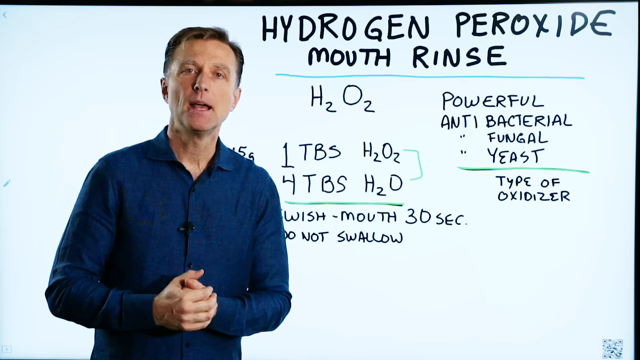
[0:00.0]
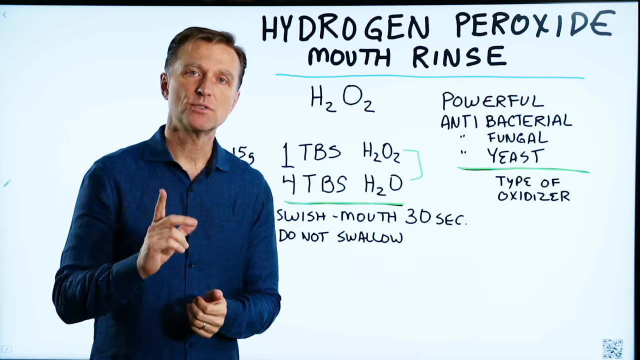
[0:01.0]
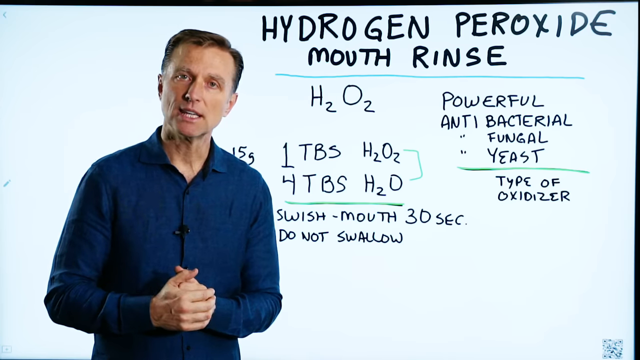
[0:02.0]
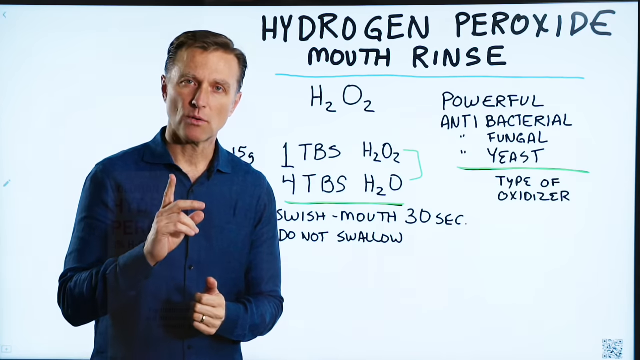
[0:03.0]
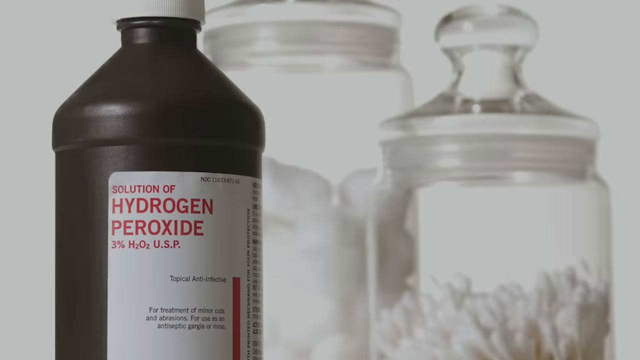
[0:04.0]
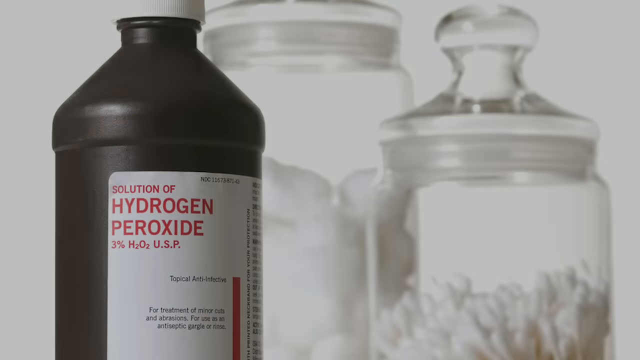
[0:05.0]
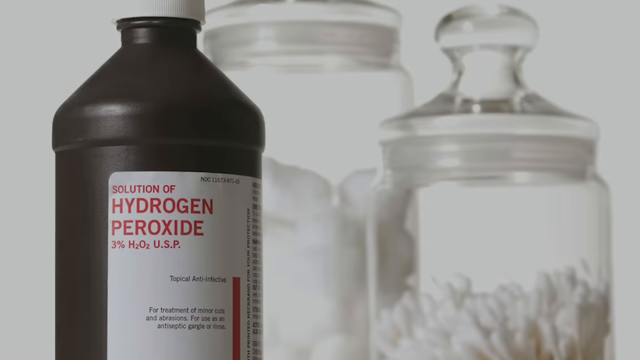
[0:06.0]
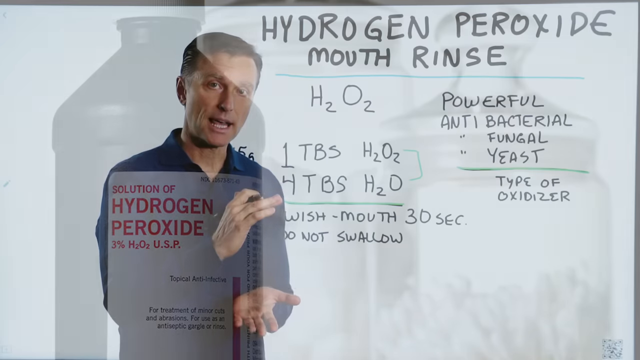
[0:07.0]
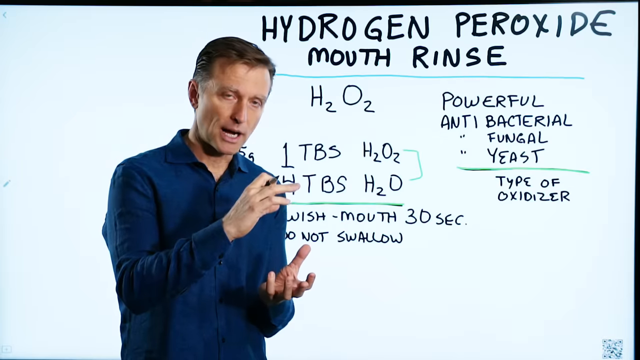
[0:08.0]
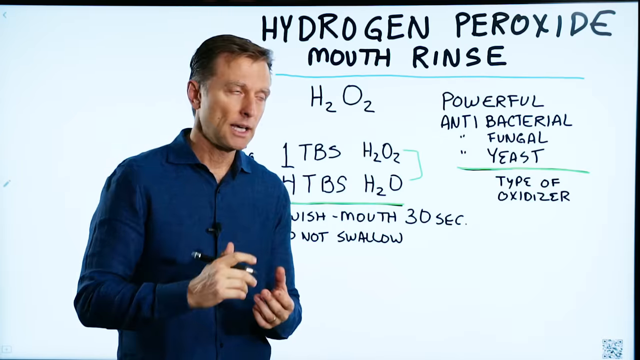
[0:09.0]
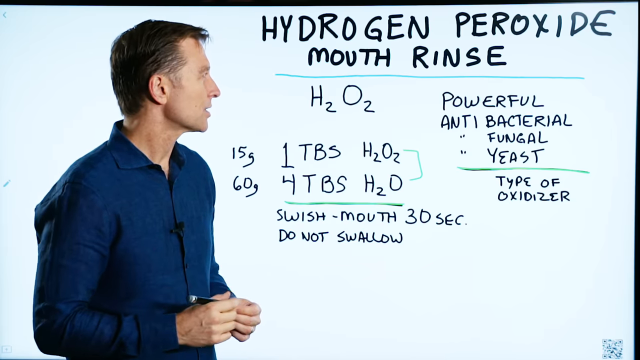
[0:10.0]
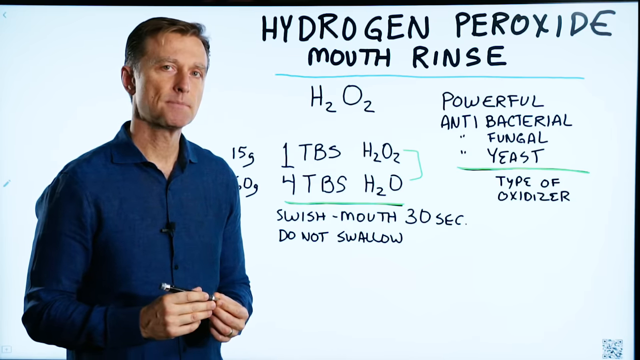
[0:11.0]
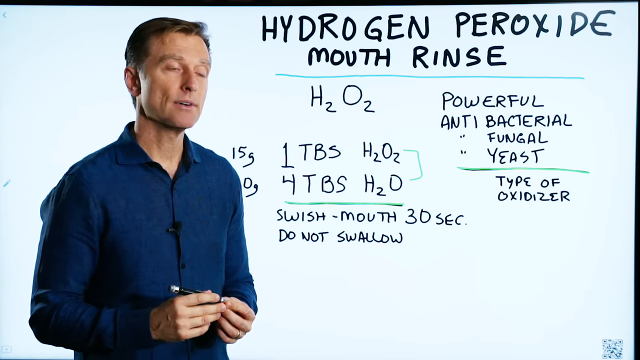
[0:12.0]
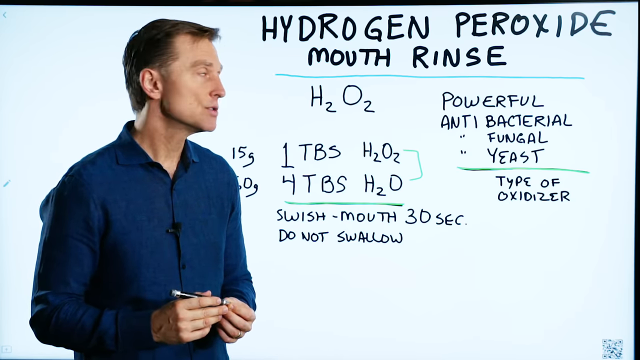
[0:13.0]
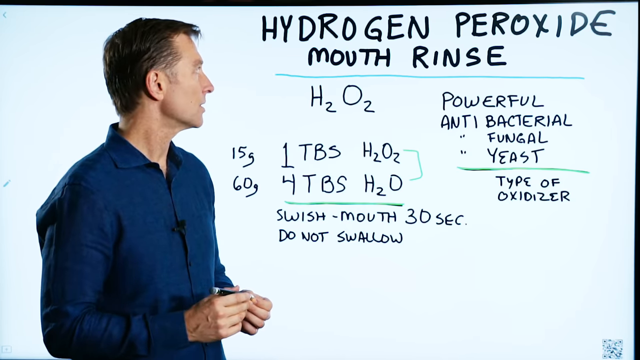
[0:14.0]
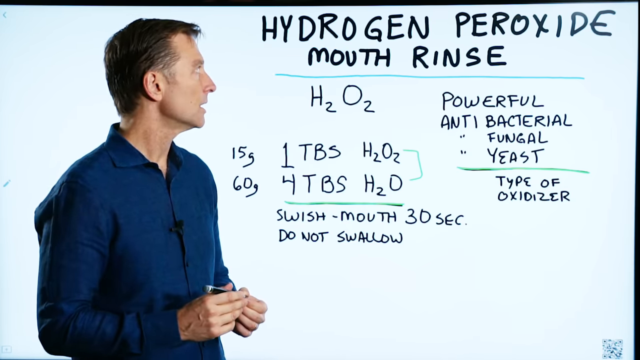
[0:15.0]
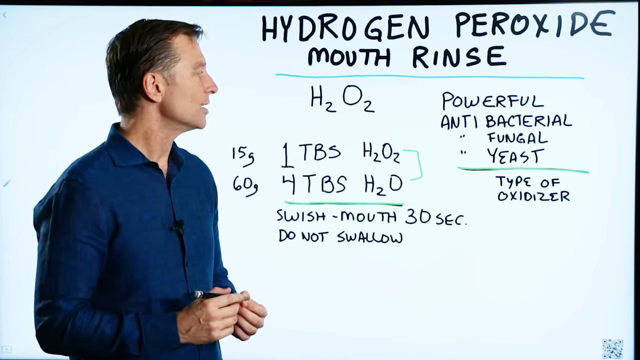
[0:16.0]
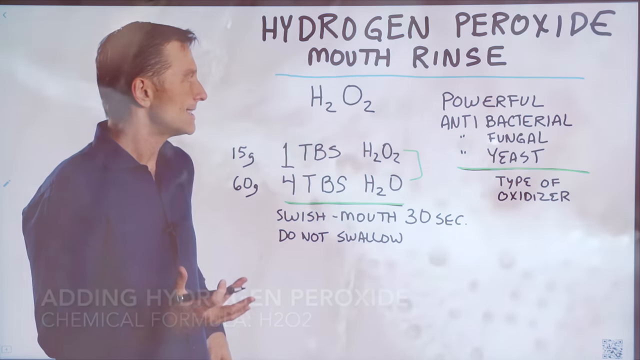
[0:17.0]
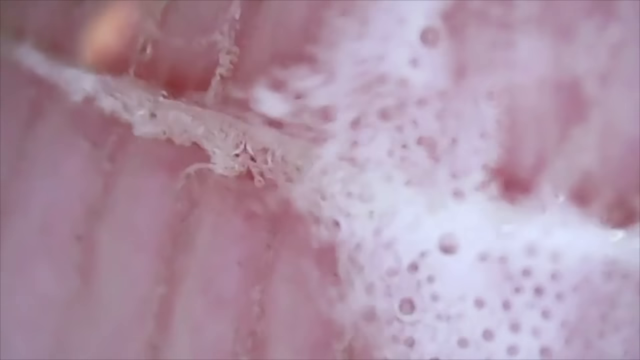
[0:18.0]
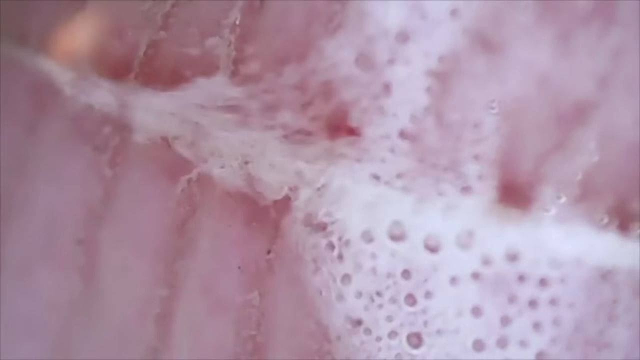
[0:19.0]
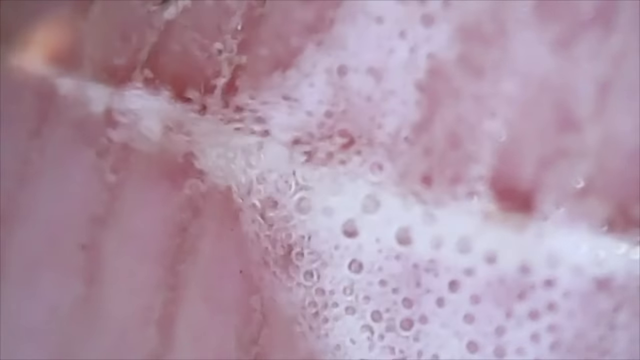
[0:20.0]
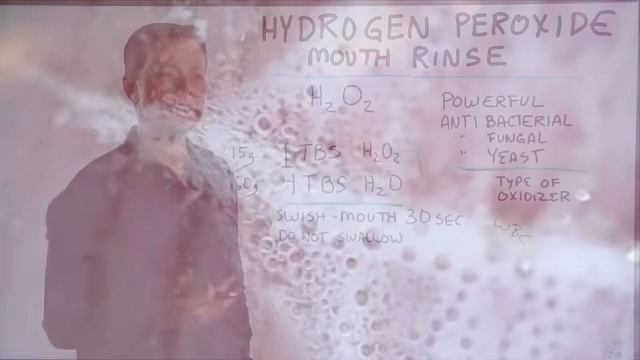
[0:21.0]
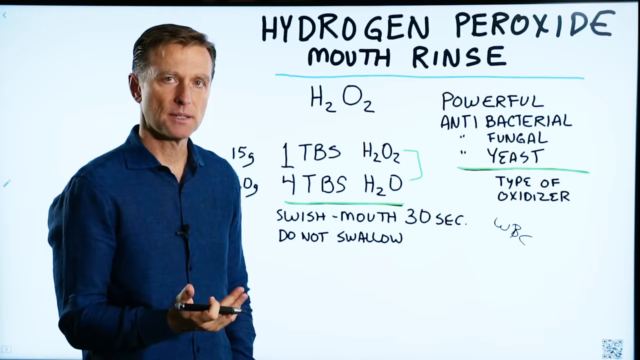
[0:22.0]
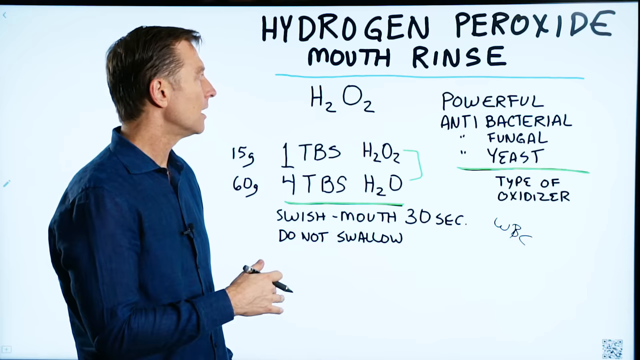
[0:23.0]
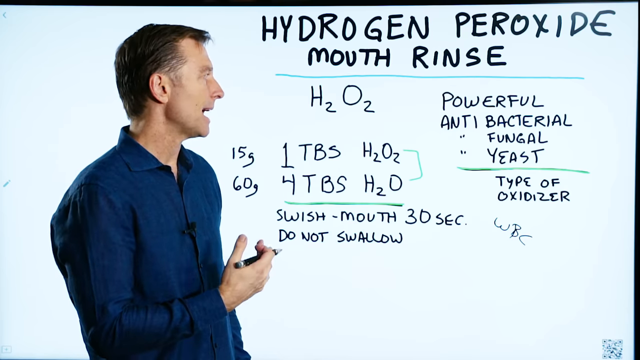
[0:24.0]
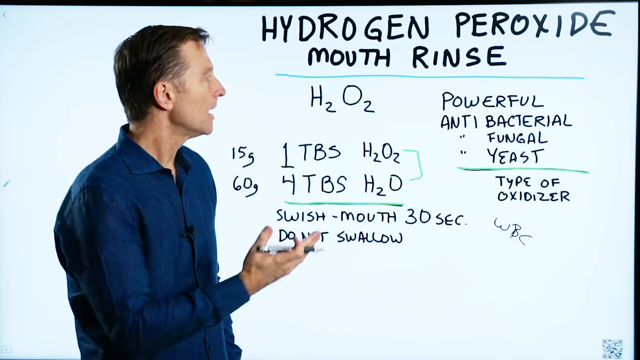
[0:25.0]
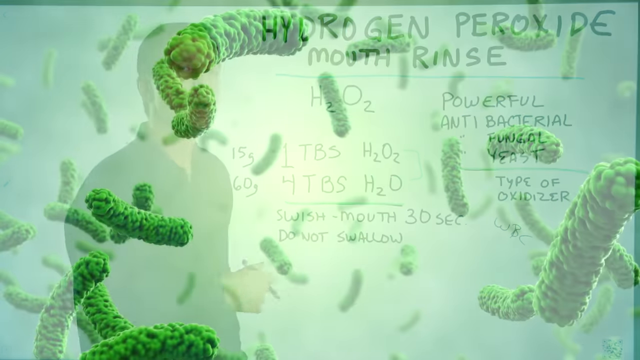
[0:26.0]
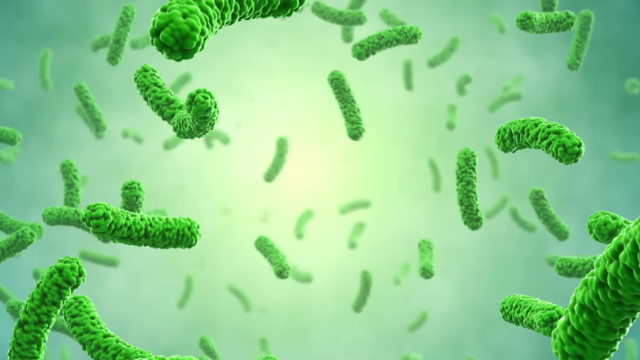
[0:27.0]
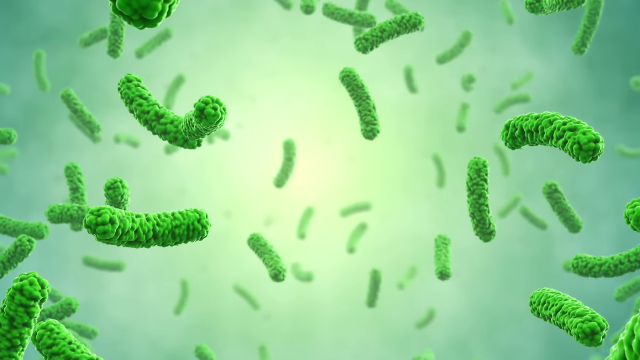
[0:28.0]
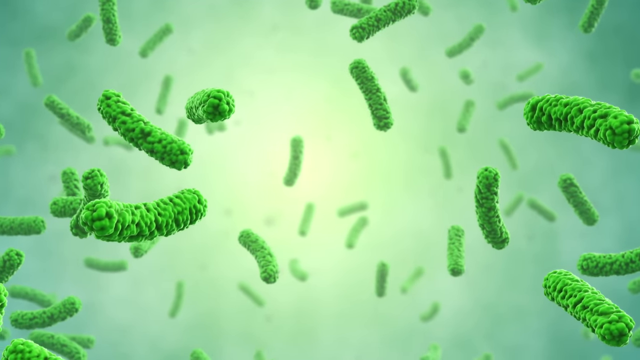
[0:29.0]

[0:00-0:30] A man in a blue shirt stands against a light blue or dusty blue background. Writing on the board includes "hydrogen peroxide" along with various other things, among them H2O2; it seems like a science lesson. The man keeps talking and moving his hands. Another screen pops up showing a bottle of hydrogen peroxide with red writing: "solution of hydrogen peroxide" and "3 percent H2O2 U.S.P." Next to it is a bottle that looks like a sugar container. The man then uses a marking pen to write on the board, looks at the board, and shows something pinkish. Green things that look like molecules or bacteria appear while he continues explaining.